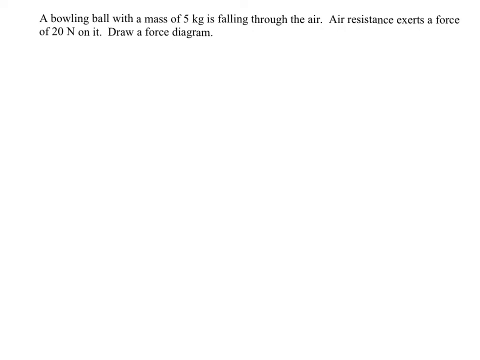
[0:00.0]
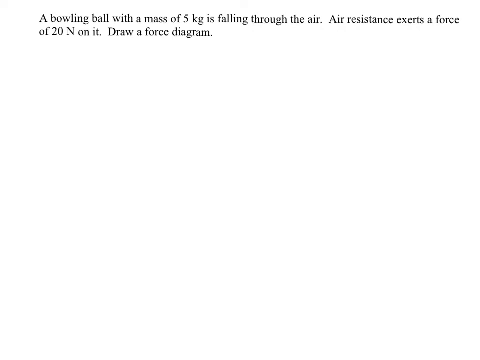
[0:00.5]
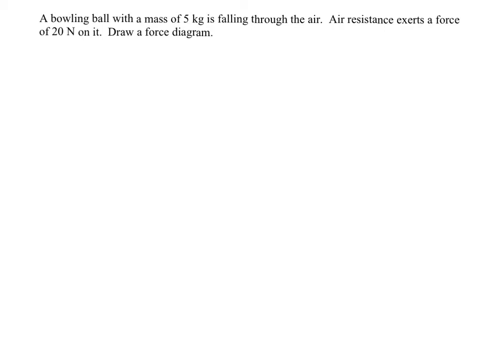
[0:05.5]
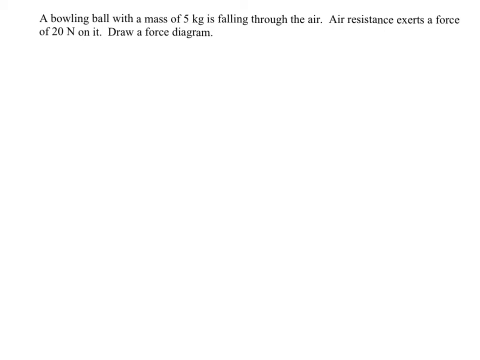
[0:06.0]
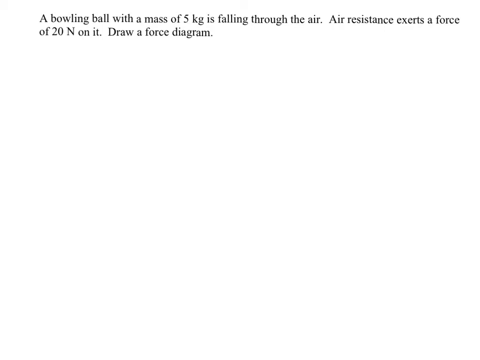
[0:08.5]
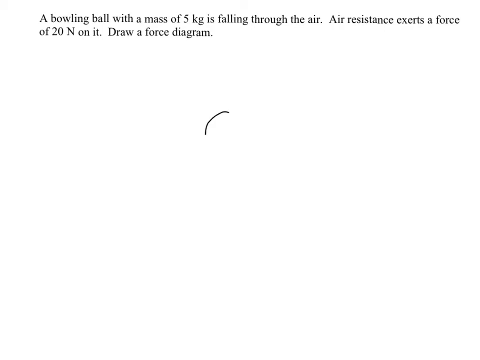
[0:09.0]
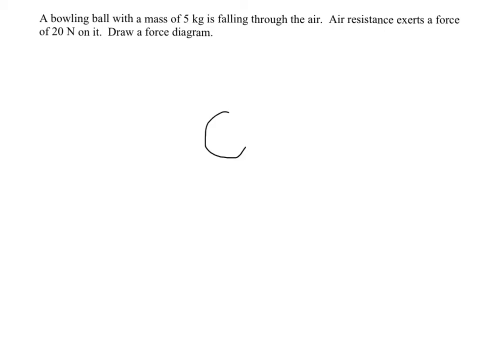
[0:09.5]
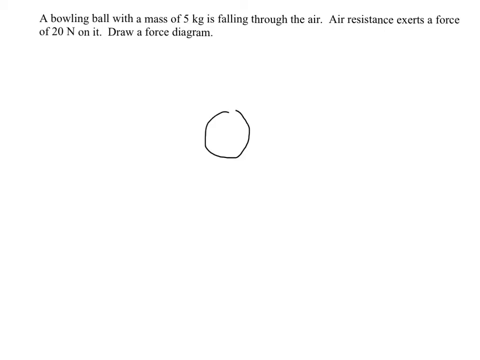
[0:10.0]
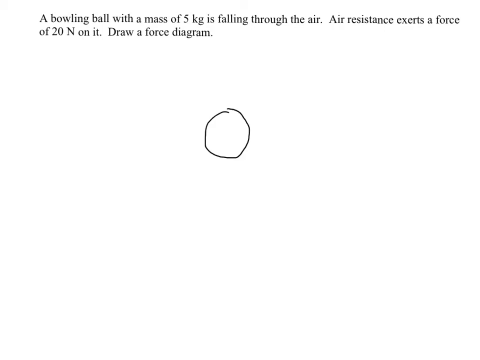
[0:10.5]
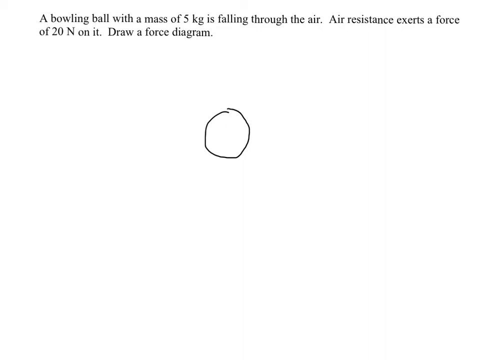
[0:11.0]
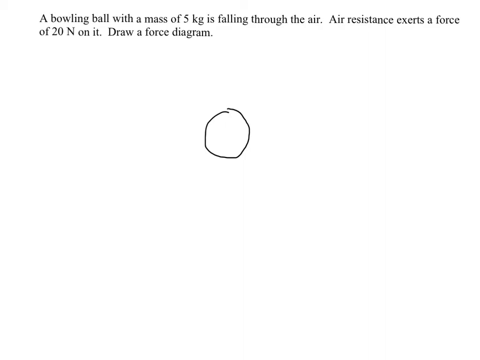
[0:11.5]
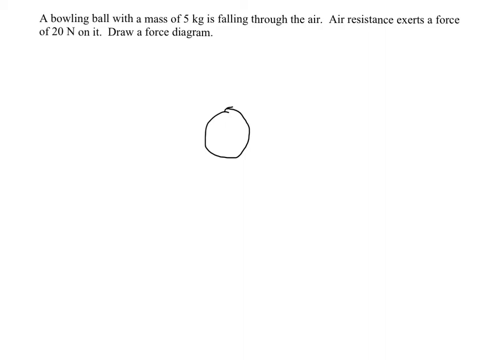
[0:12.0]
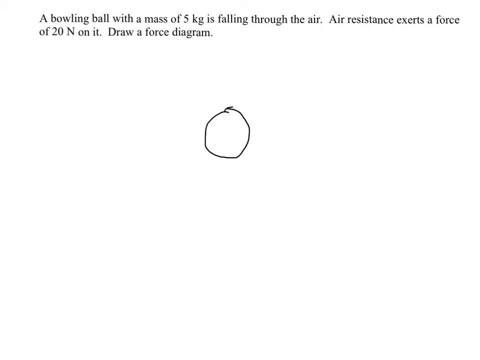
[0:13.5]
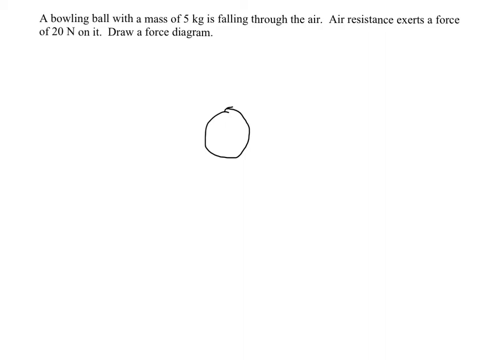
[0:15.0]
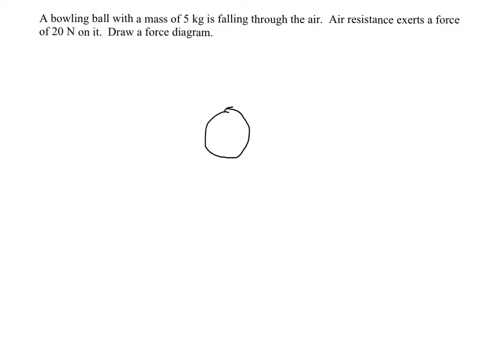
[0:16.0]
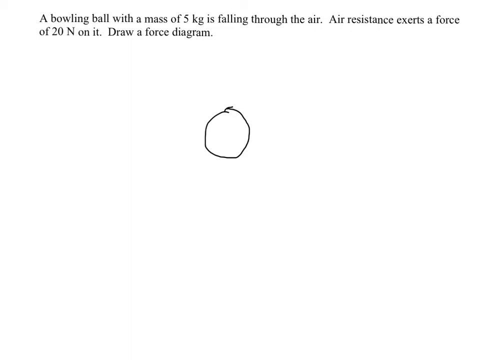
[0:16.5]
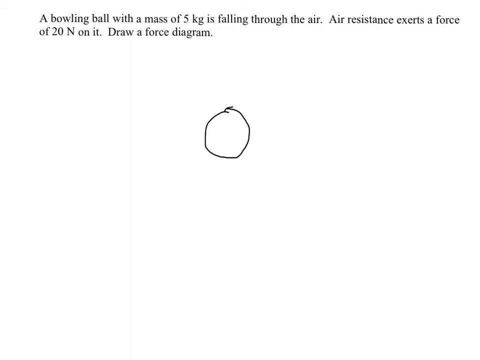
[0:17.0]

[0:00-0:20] A physics question is presented on a whiteboard, typed on a white background. The question apparently reads: "a bowling ball with a mass of five kilogram is falling through the air then air resistance exerts a force of 20 newtons on it" and then "draw a force diagram". Below the question, a hand draws on the board, sketching a round ball.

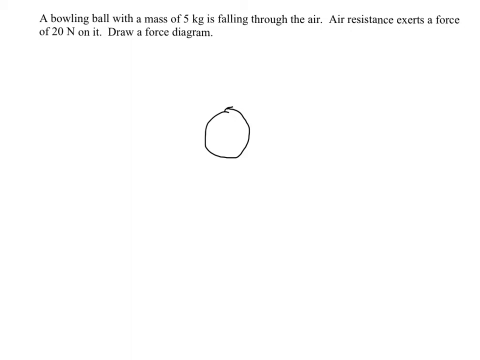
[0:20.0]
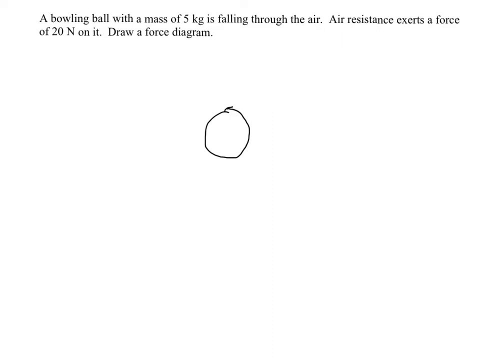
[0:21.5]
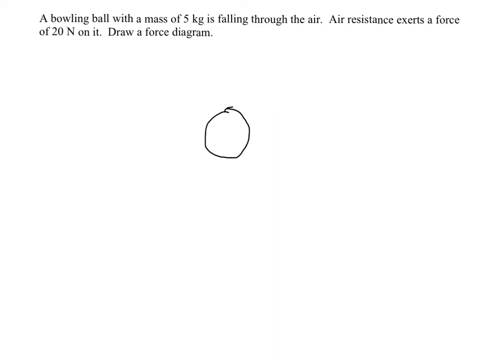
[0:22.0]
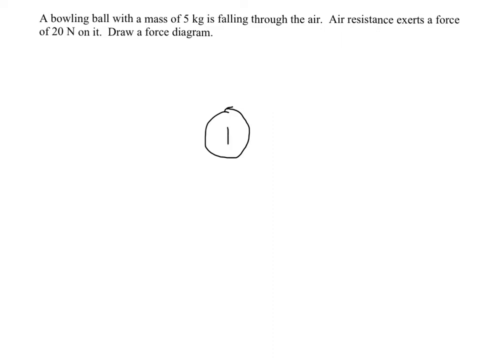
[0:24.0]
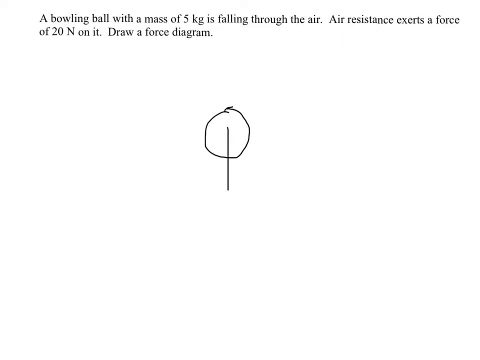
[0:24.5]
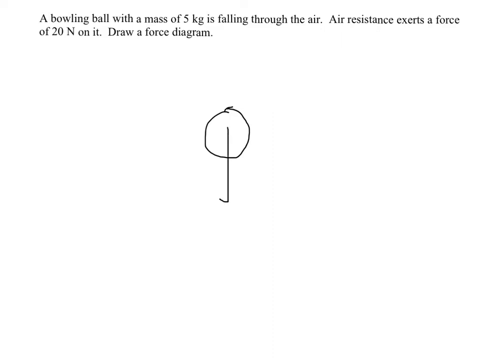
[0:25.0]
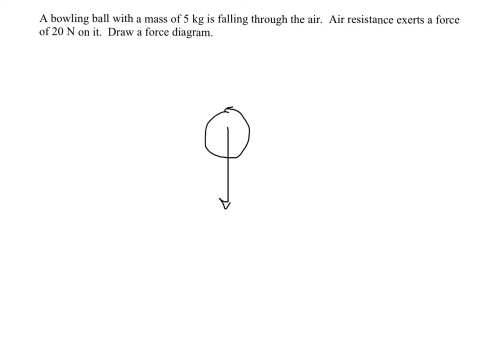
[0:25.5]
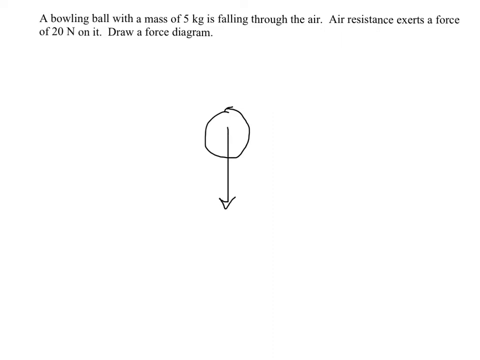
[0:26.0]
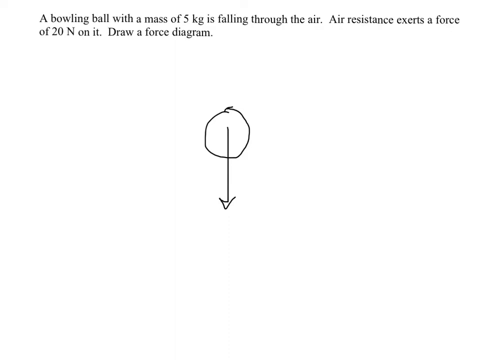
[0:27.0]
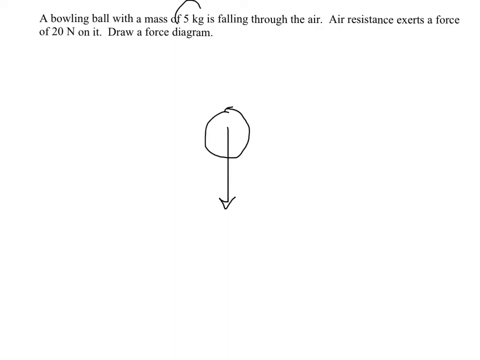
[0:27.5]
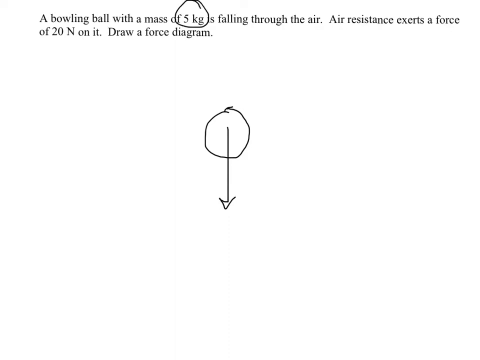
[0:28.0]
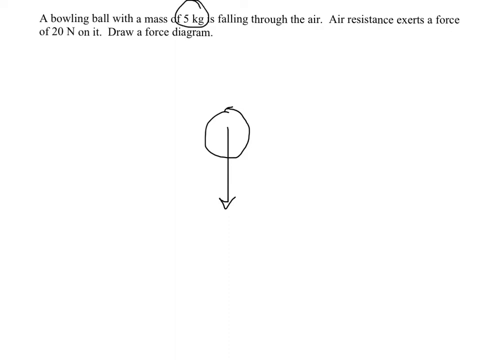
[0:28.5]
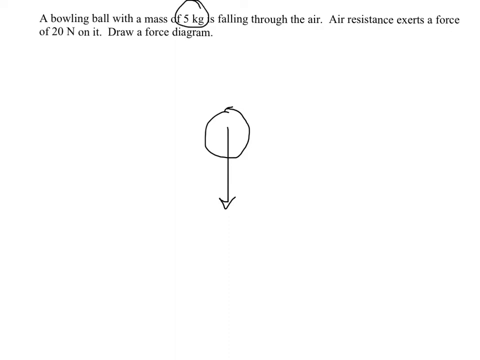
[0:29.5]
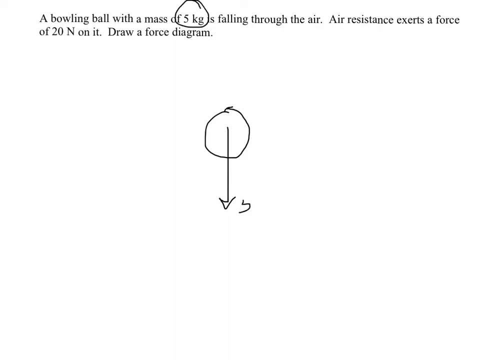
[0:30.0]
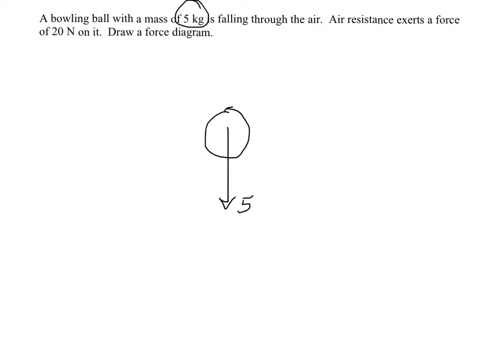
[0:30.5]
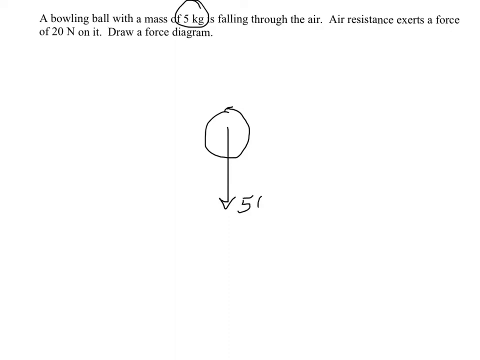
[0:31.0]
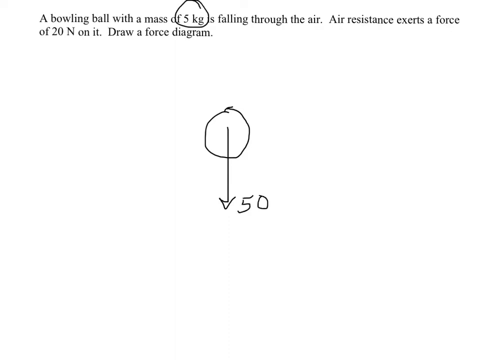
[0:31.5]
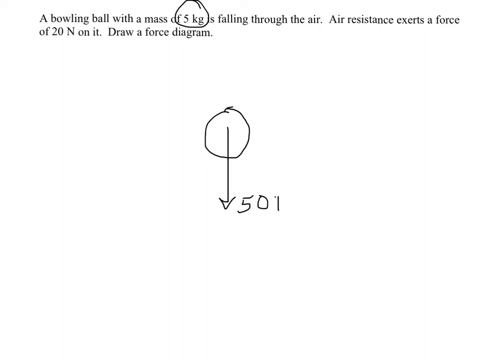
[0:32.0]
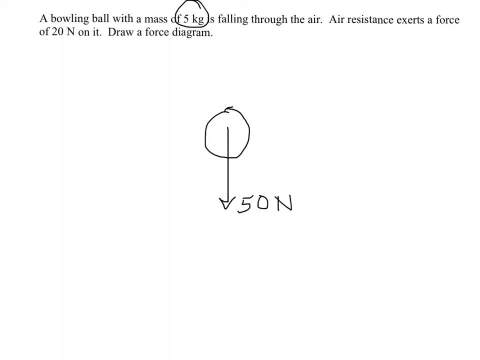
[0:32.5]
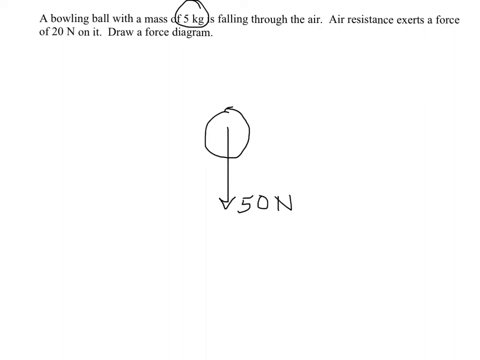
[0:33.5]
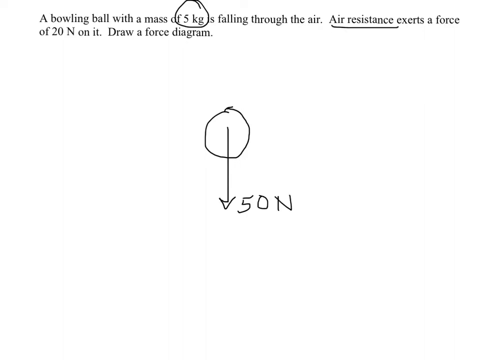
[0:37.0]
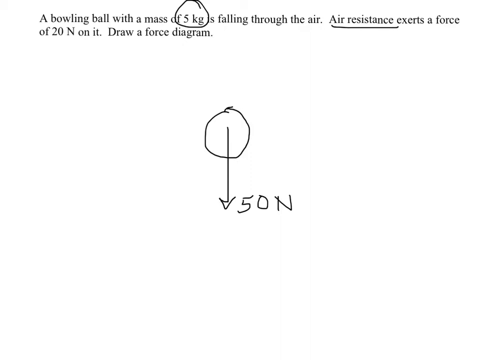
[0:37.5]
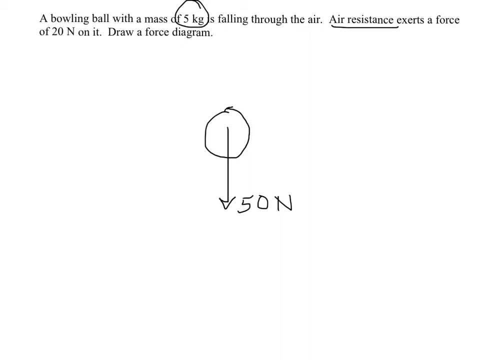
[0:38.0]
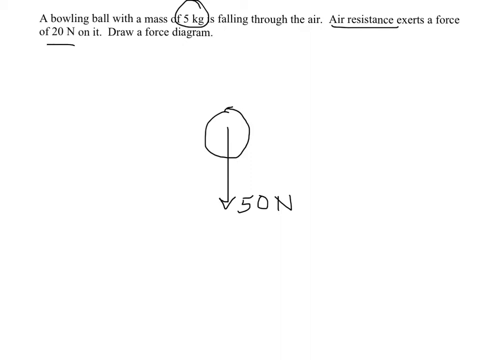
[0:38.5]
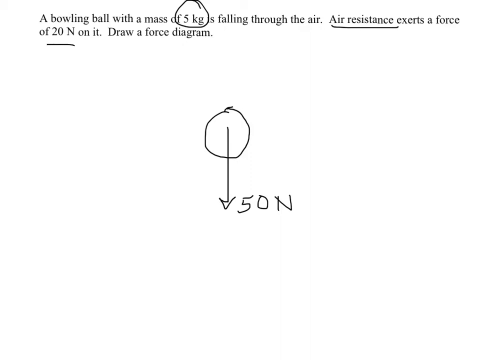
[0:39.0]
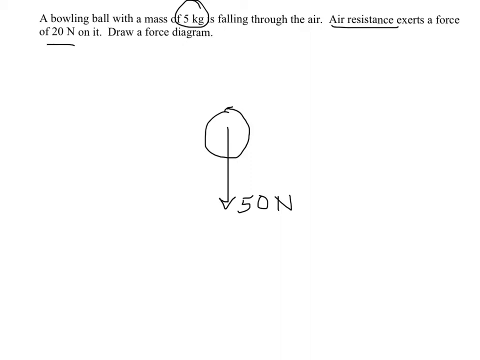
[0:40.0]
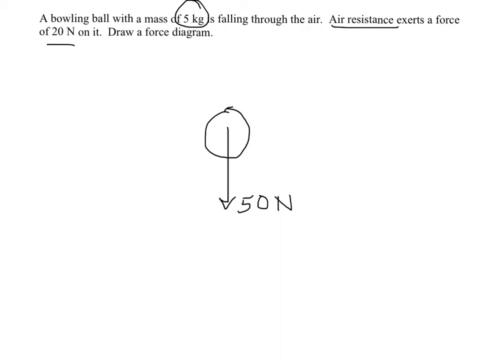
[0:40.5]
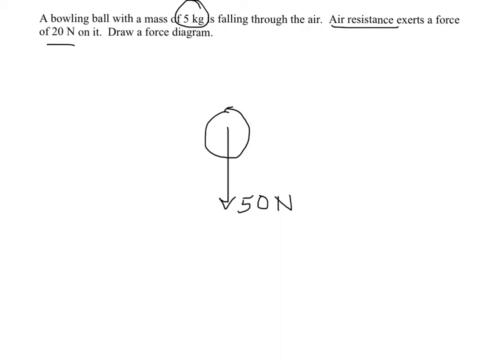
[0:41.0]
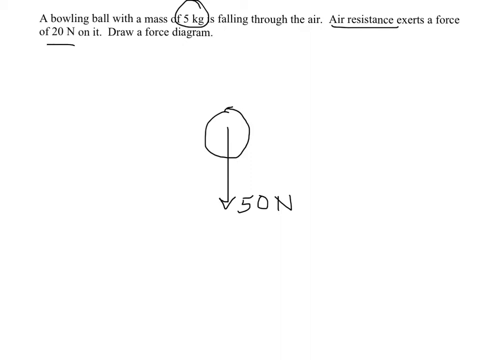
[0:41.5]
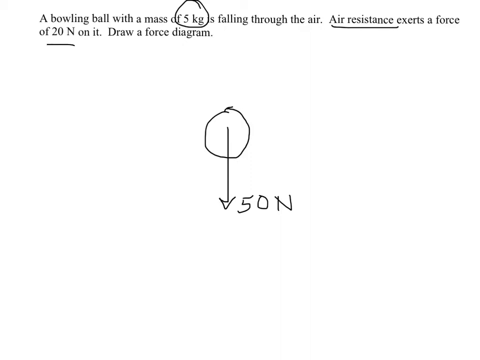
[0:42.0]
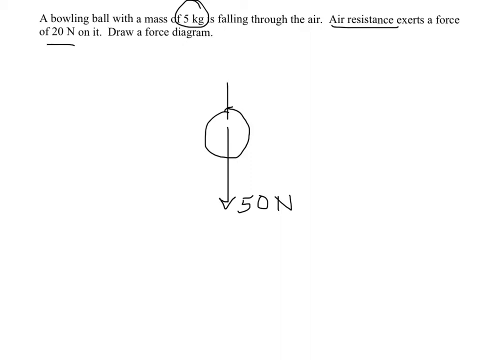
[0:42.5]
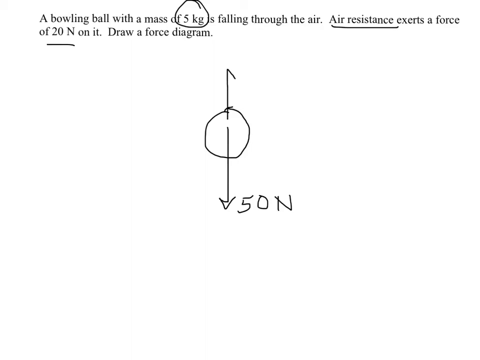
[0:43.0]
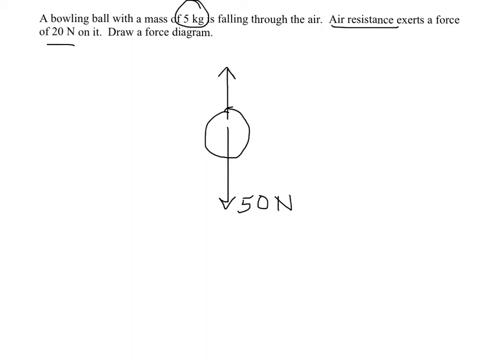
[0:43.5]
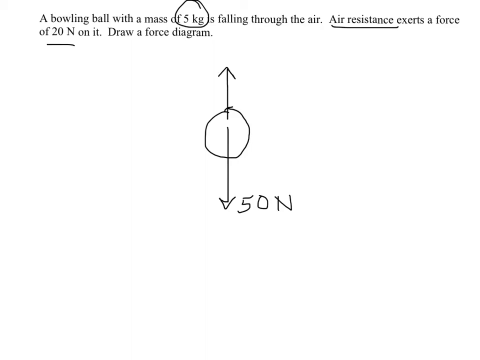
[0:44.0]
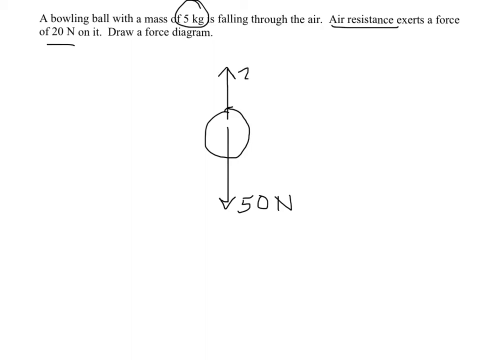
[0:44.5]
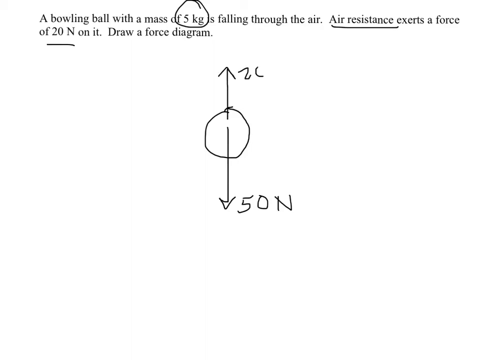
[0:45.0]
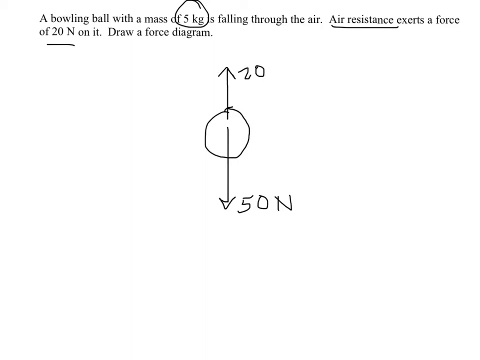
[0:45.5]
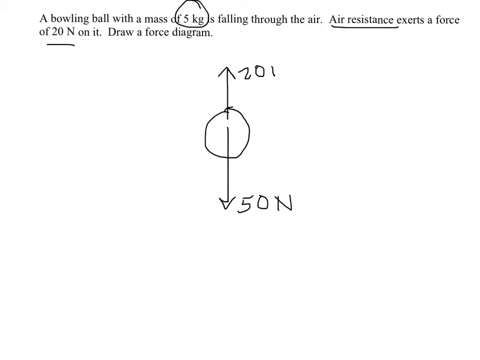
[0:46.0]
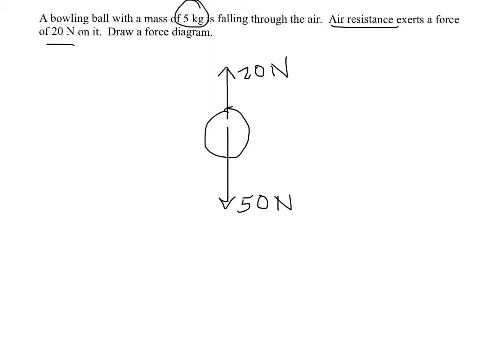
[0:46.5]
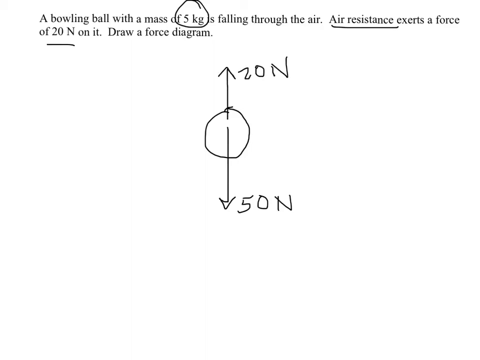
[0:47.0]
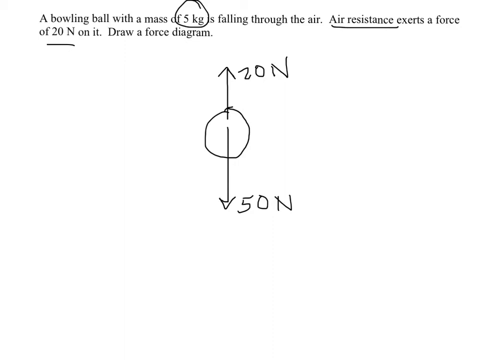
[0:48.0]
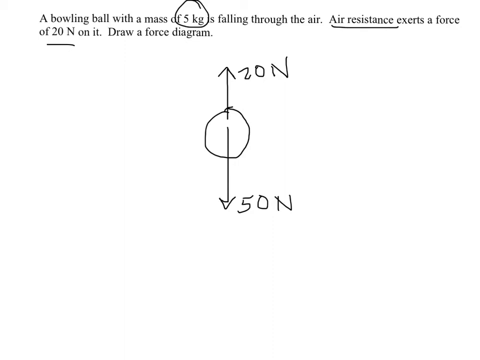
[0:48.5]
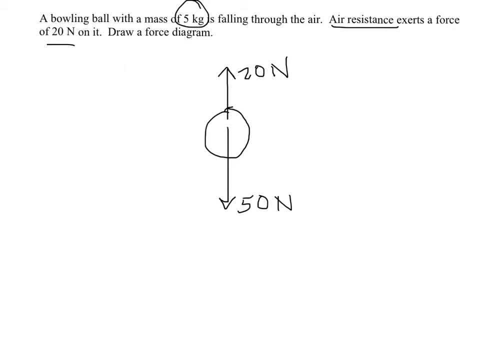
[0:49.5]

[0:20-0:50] The person working out the question highlights each step: they highlight "5 kg" and "20 N", then underline "air resistance". They continue the sketch started earlier, drawing an arrow pointing downwards labeled "50 N", and after highlighting other parts, an arrow pointing upwards labeled "20 N". The sketch, apparently the ball, now has two arrows showing the forces on it: 20 N pointing upwards and 50 N pointing downwards.